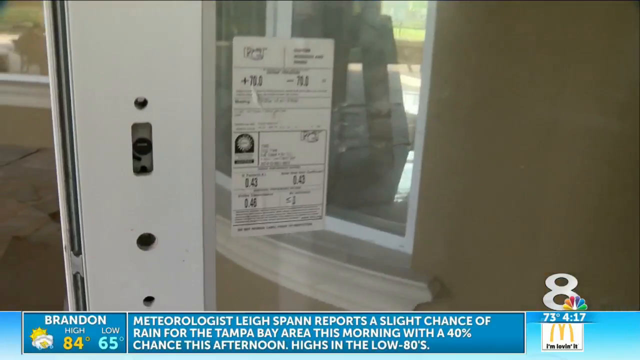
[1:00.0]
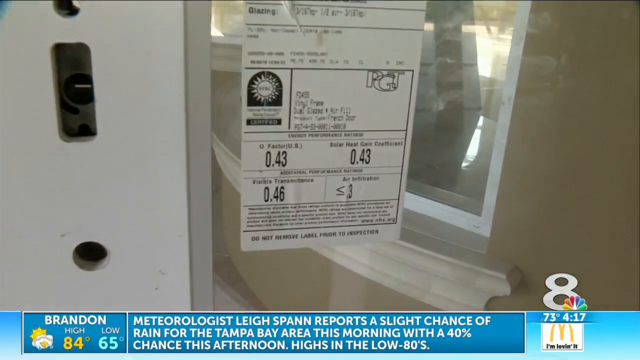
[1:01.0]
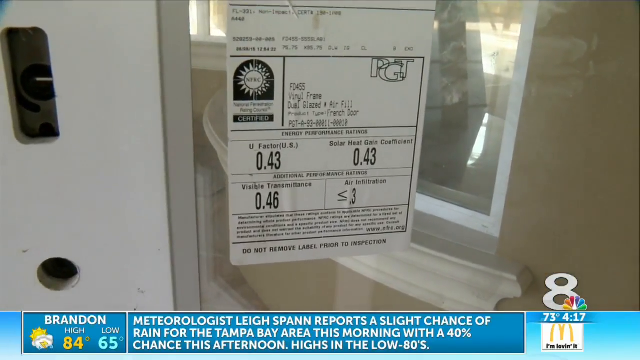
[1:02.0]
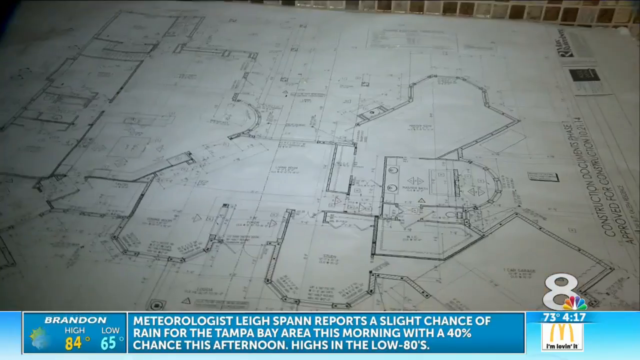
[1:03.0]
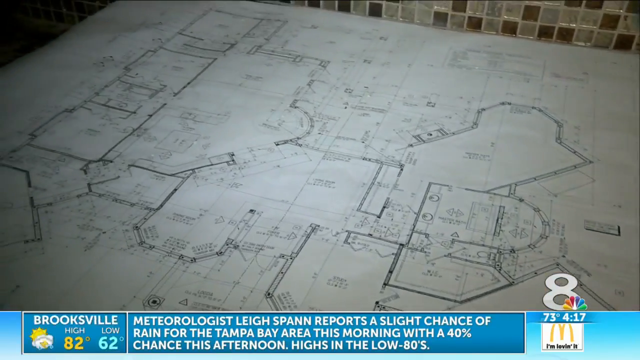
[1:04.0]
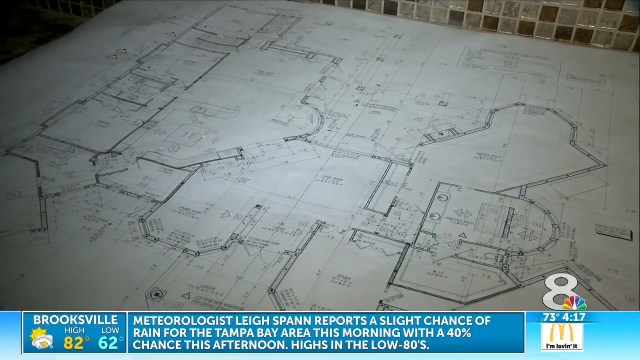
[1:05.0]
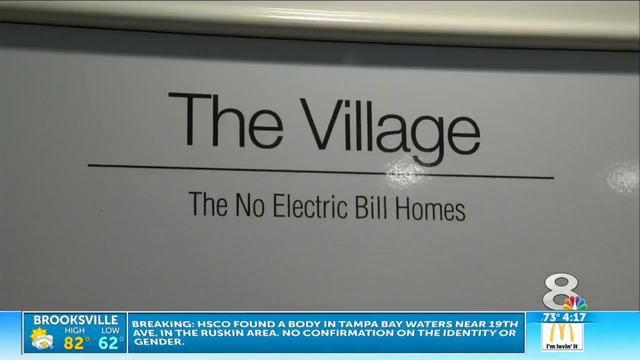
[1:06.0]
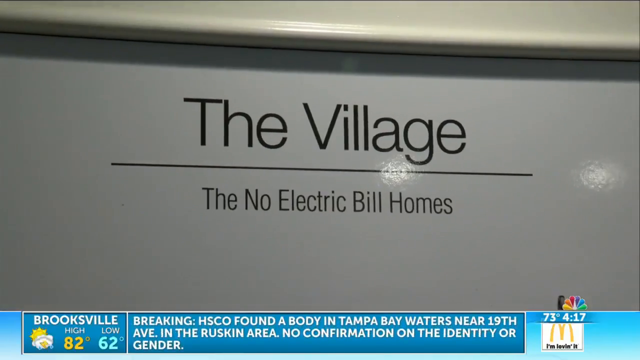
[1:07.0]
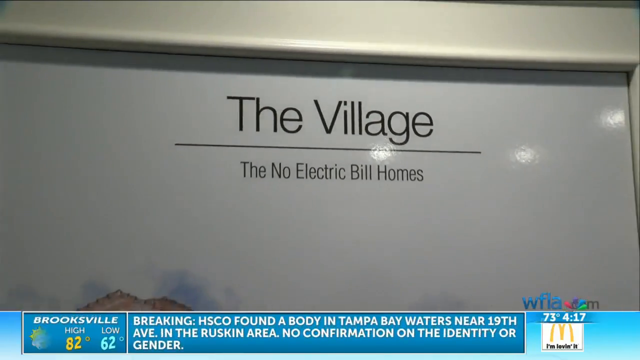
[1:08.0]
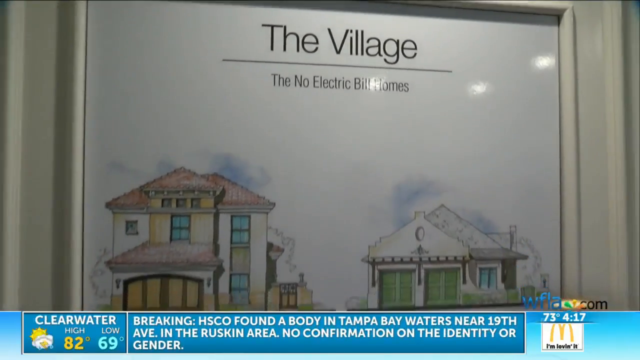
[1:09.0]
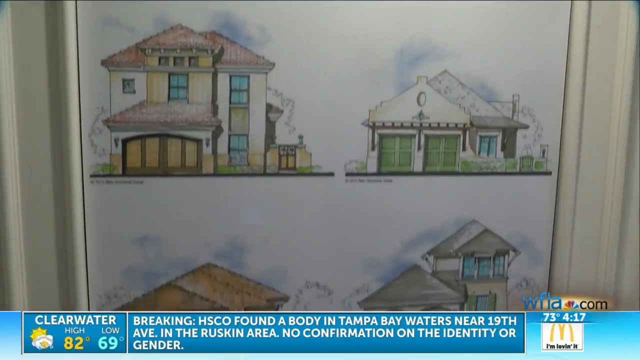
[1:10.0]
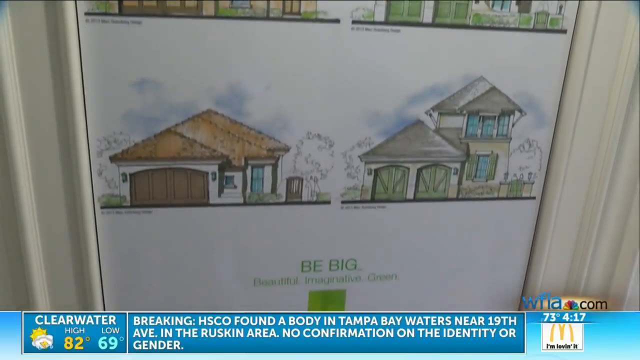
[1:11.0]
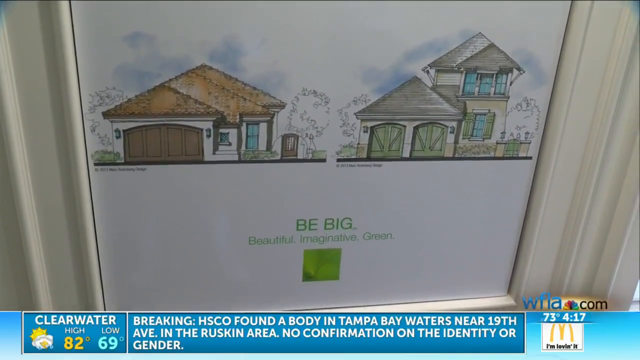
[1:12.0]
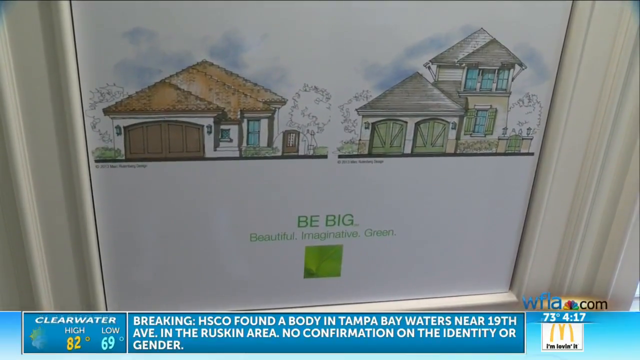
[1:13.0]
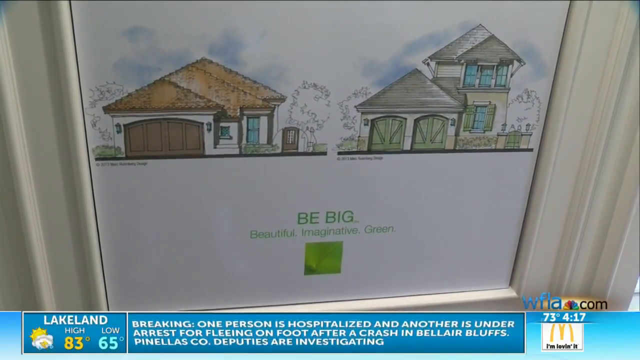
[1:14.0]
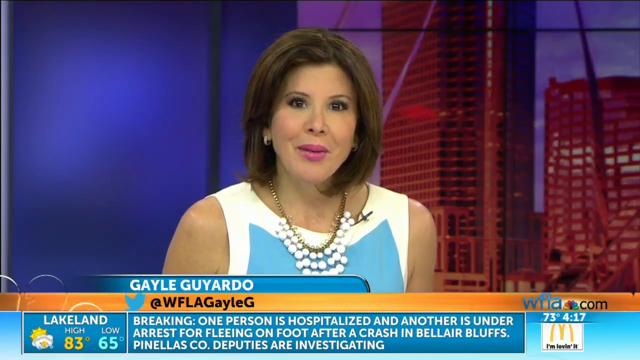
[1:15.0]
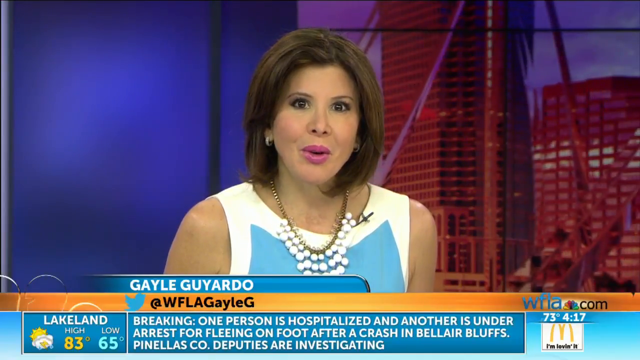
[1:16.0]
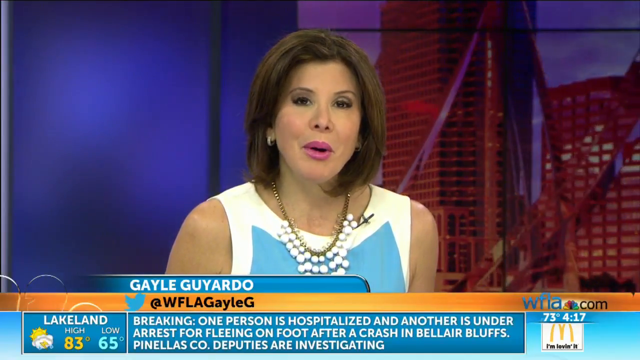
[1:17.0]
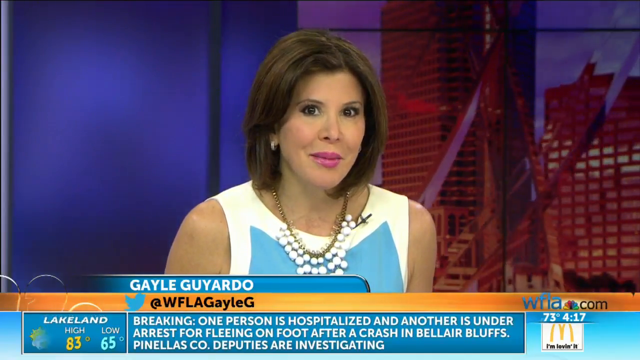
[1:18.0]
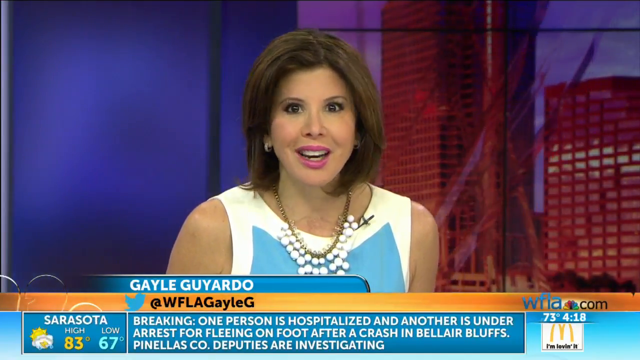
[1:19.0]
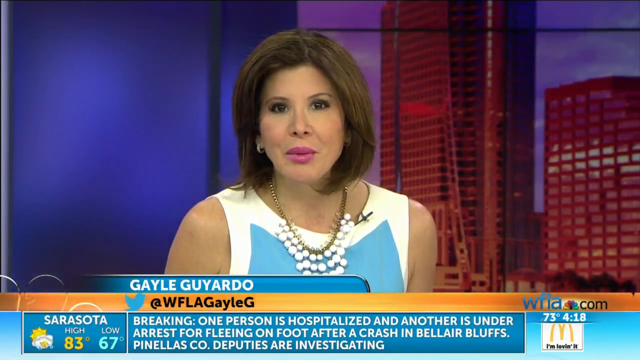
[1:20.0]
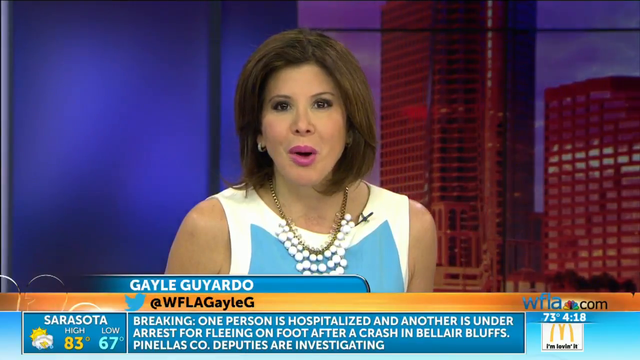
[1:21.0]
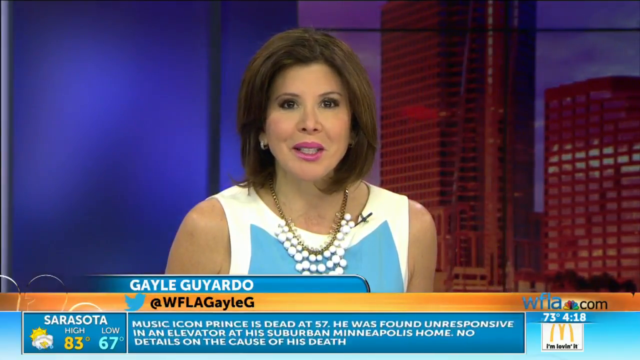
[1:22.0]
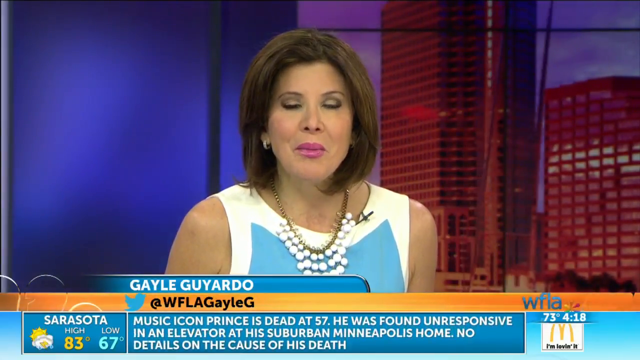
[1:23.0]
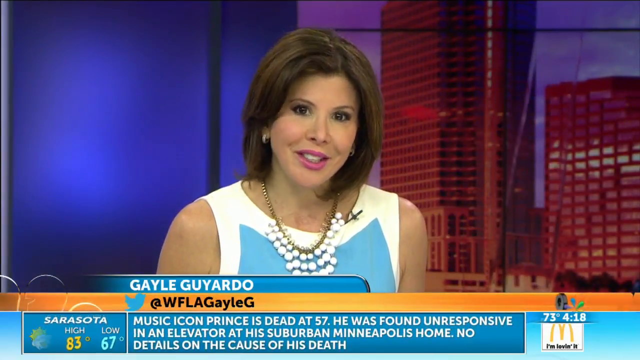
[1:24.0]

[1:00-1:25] The man continues talking as the segment goes on, with footage of floor plans and behind-the-scenes material. A label on a door shows several numbers, including 0.43 and 0.46, something about air infiltration, and a value of less than or equal to 3. The actual floor plans appear, looking like blueprints but on white paper. Next comes a painting of something called "the village" that says "the no electric bill homes", with a few houses depicted on it. The video then cuts back to the same woman seen at the beginning, Gail Gallardo, who is now sitting and ending the segment.